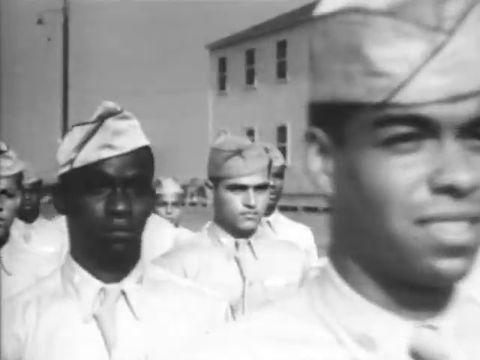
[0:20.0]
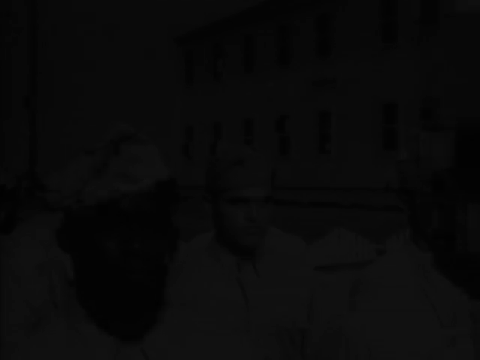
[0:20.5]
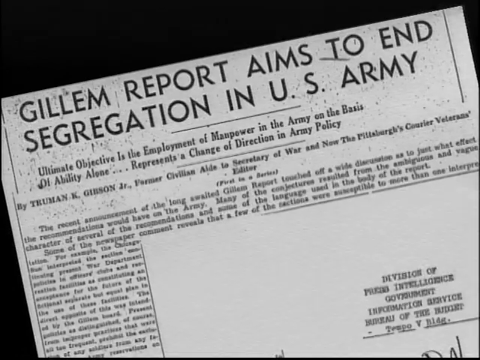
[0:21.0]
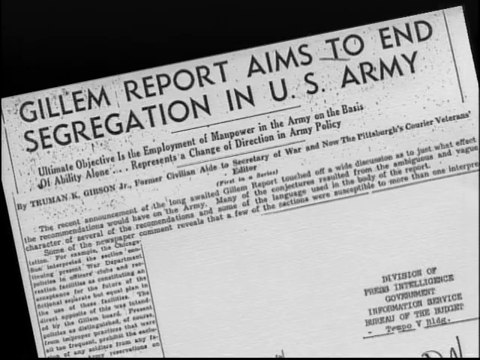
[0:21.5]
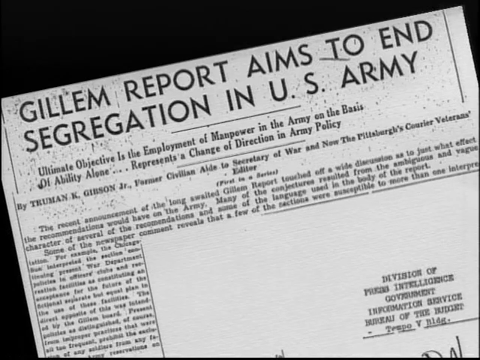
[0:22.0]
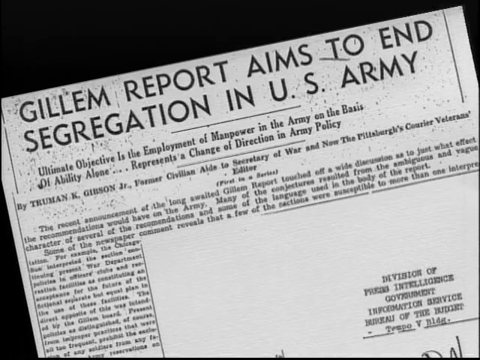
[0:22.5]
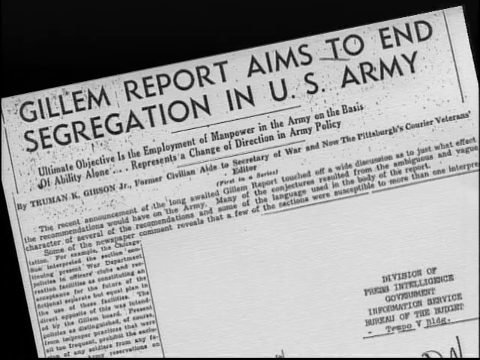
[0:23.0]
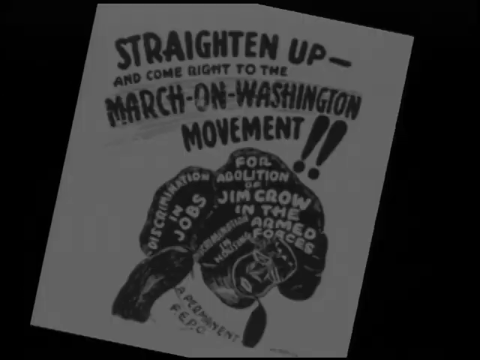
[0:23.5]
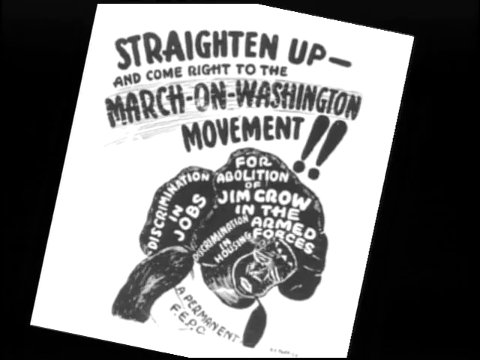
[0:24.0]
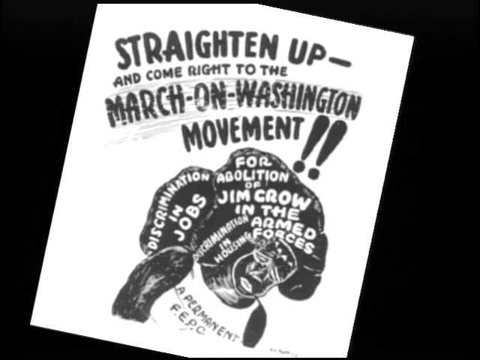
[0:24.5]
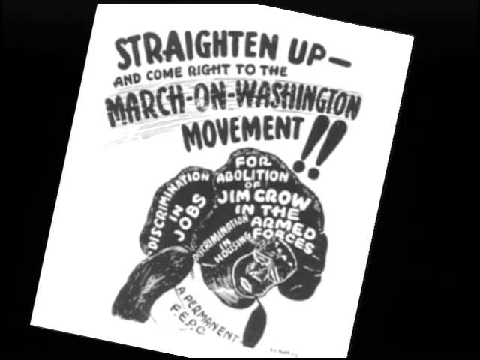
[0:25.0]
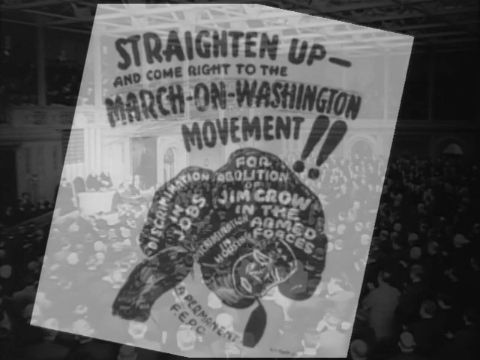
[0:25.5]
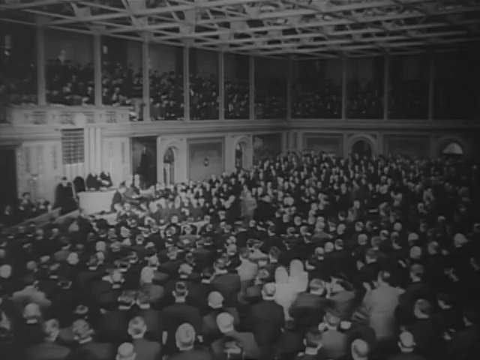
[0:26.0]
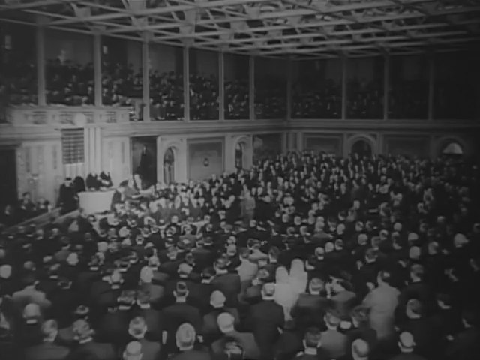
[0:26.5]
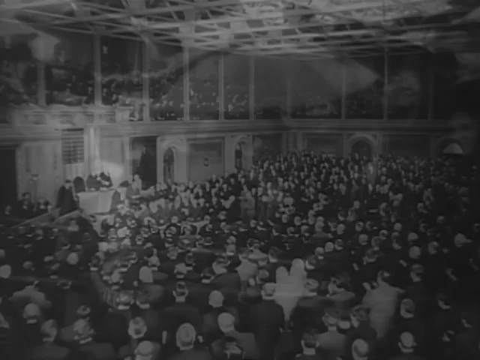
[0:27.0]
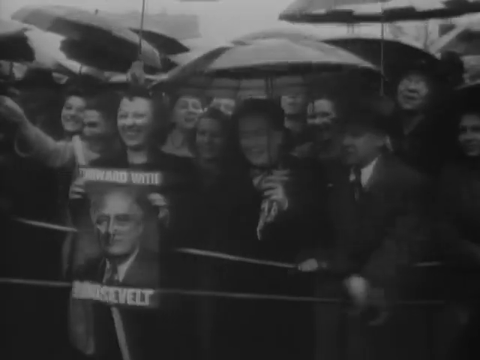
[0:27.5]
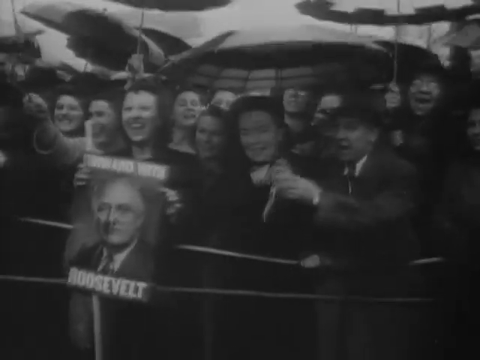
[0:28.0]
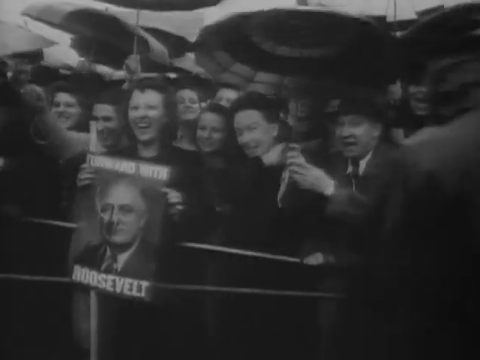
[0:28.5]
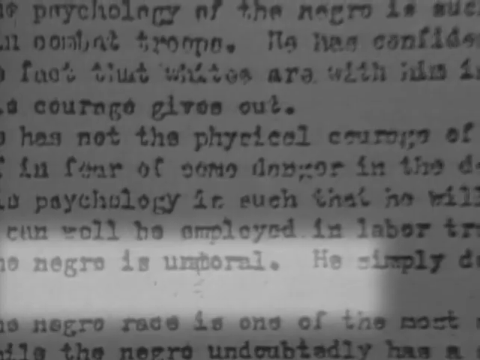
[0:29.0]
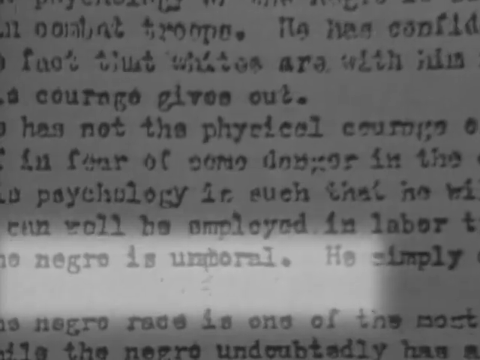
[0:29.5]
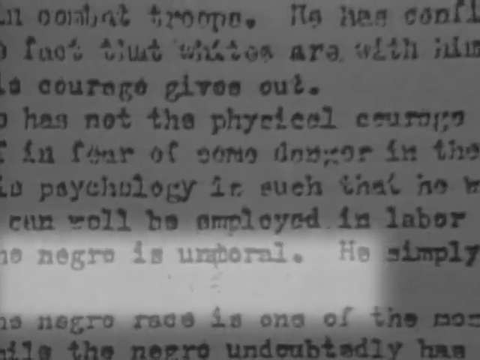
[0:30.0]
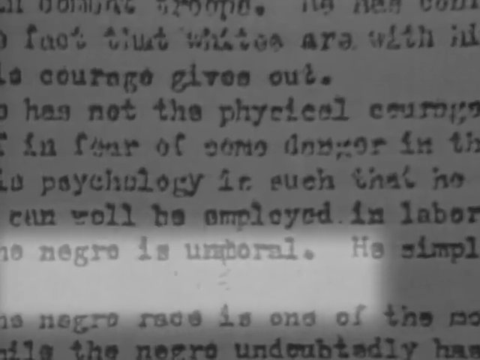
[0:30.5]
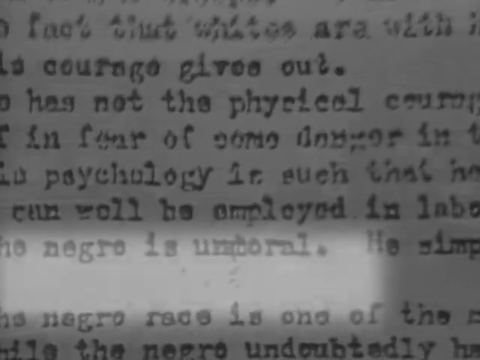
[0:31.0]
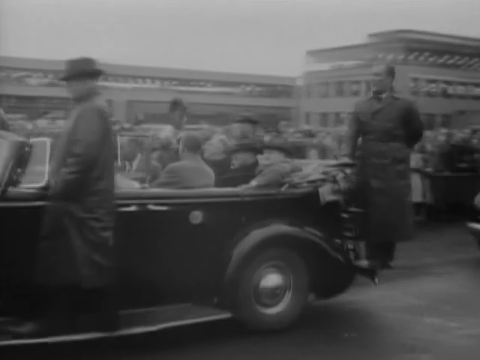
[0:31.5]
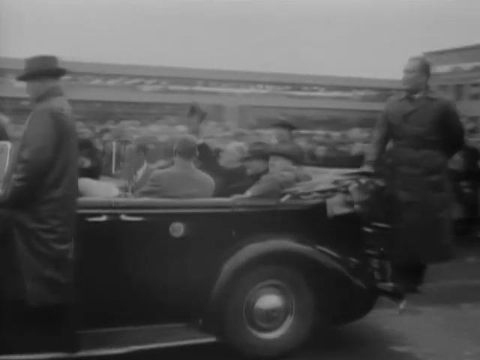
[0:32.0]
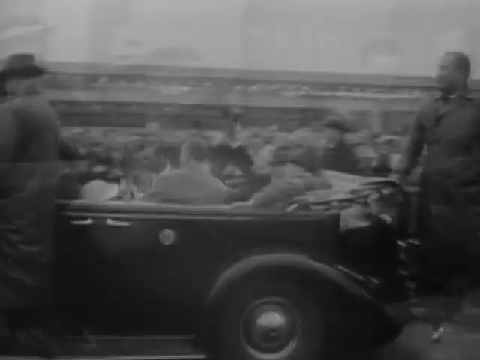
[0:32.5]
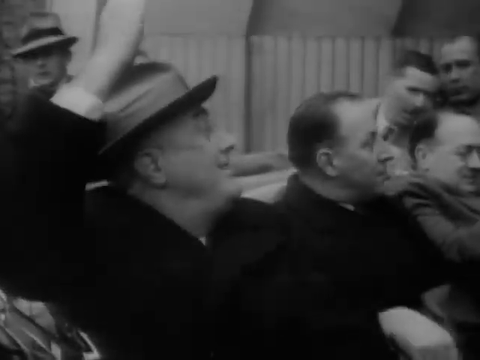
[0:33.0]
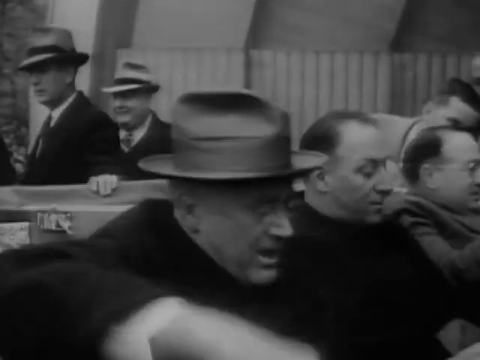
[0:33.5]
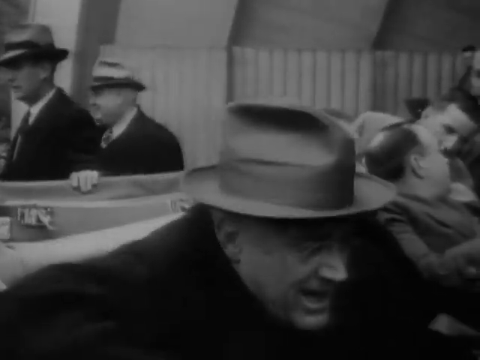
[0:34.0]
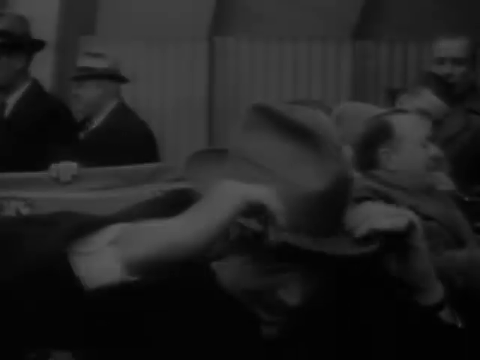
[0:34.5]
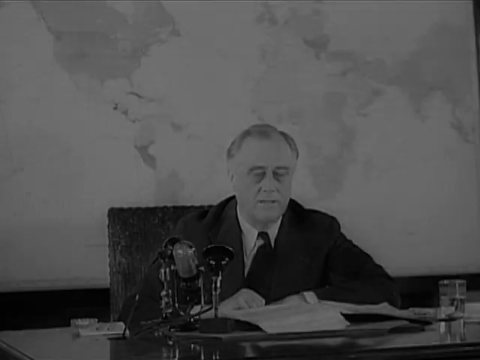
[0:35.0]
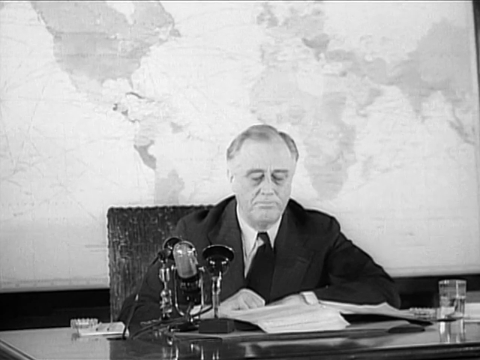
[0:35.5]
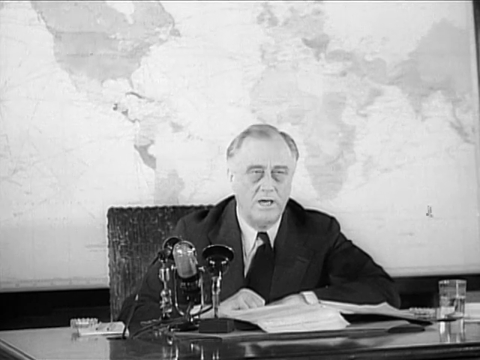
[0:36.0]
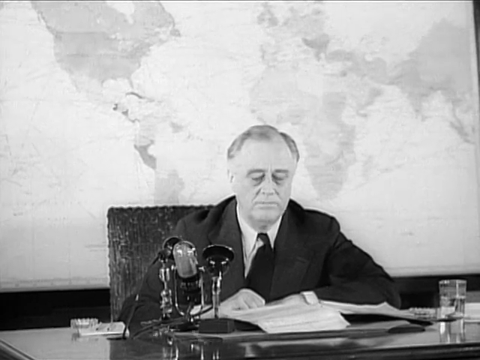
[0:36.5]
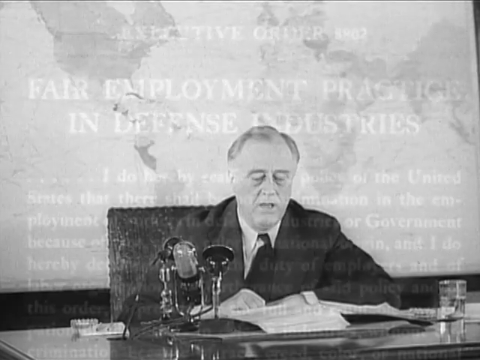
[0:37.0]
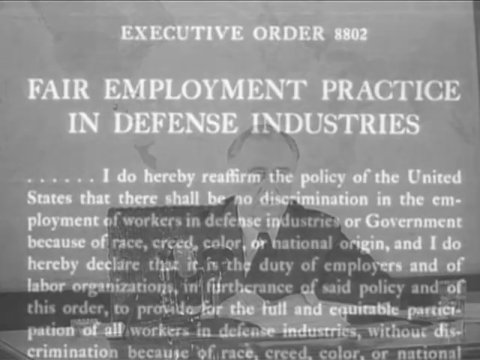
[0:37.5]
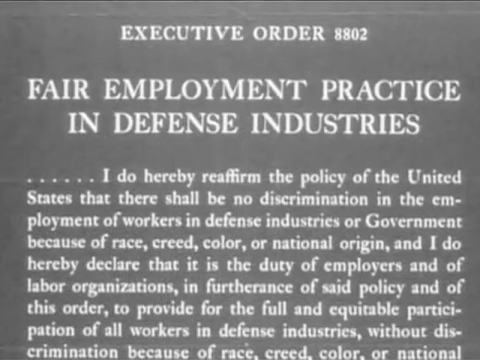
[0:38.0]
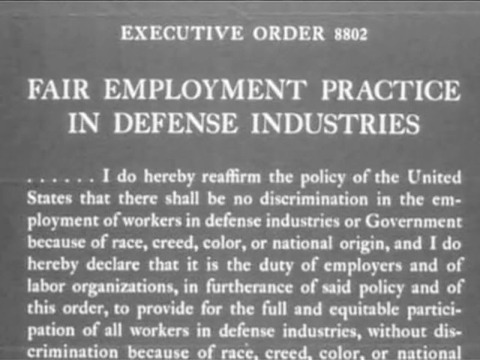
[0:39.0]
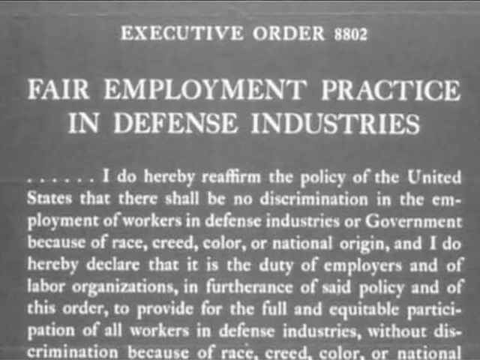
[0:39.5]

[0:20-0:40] The "colored" section continues with a group of soldiers walking by, possibly with someone white mixed in among them. There is a building in the background or to the right, and a light pole. A paper, possibly a newspaper article, reads "Gillem report aims to end segregation in the U.S. Army" and includes the words "the ultimate objective is the employment of manpower". Another paper reads "straighten up and come to the right" and "march on Washington movement", with text about ending discrimination in jobs and Jim Crow in the armed forces. A room is packed with people, and outside people hold Roosevelt signs, apparently in the rain. A typewritten note shows the letters "N-E-G-R-O". A convertible carrying some people goes down the street; it is Roosevelt's car. Roosevelt then speaks on camera, and text about fair employment practices in defense industries appears, reading "I do hereby reaffirm the policy of the United States that there shall be no discrimination in the employment of workers in the defense industries of government", along with the words race, creed, color and national origin.